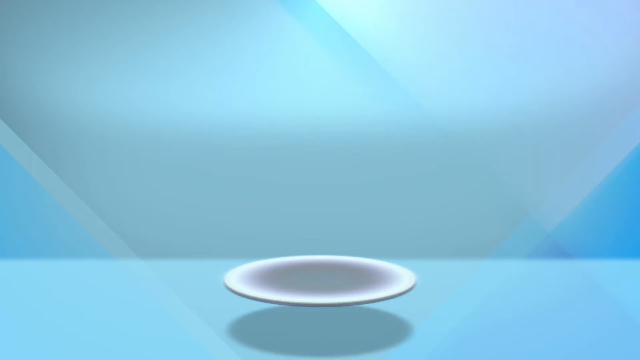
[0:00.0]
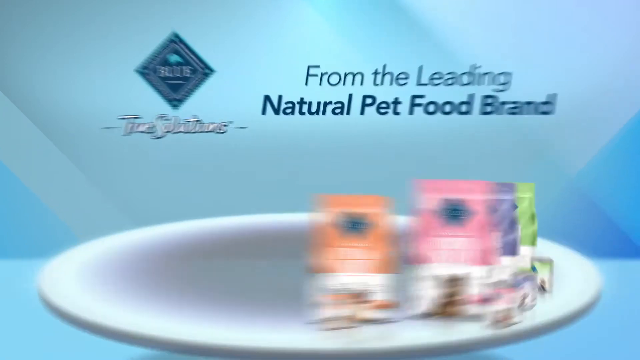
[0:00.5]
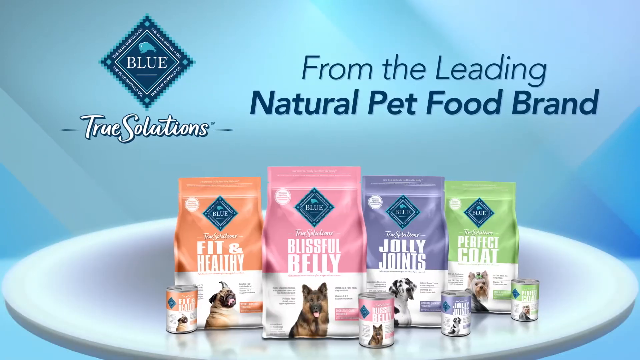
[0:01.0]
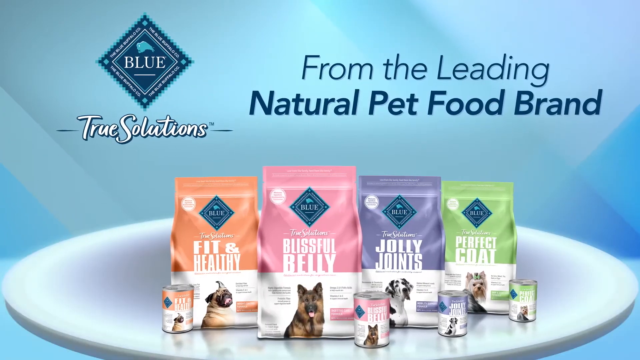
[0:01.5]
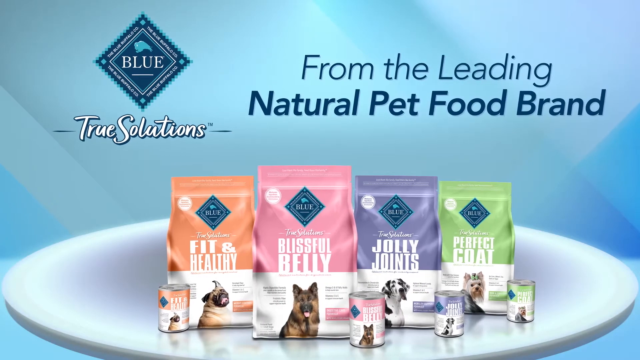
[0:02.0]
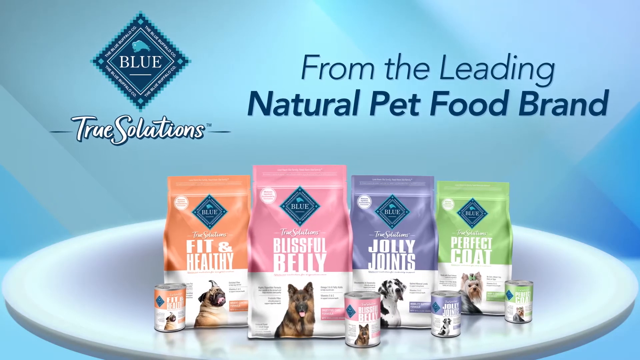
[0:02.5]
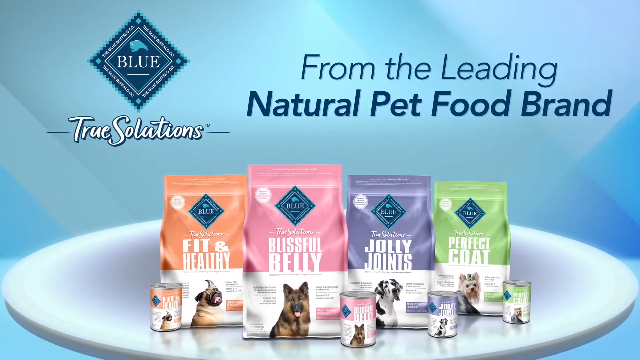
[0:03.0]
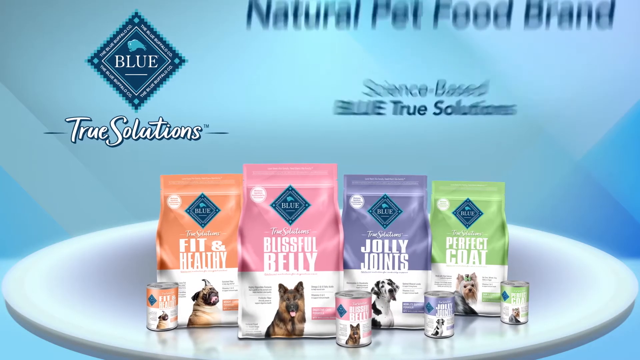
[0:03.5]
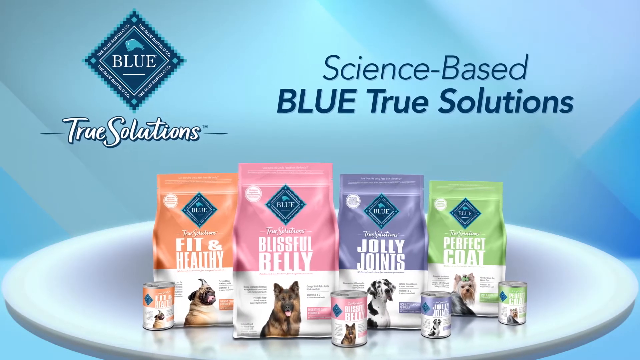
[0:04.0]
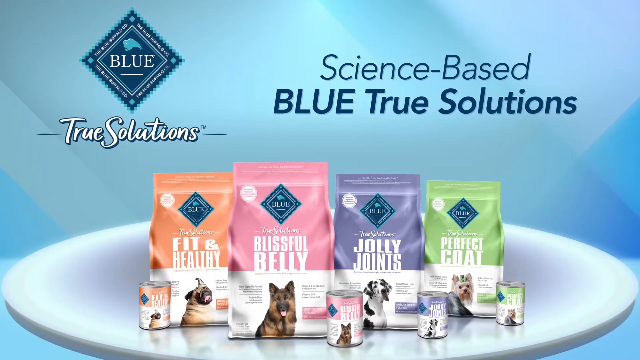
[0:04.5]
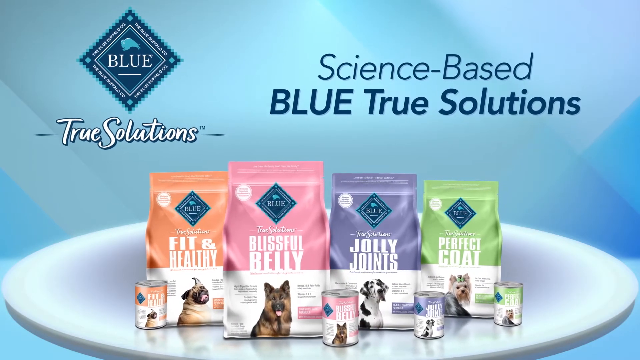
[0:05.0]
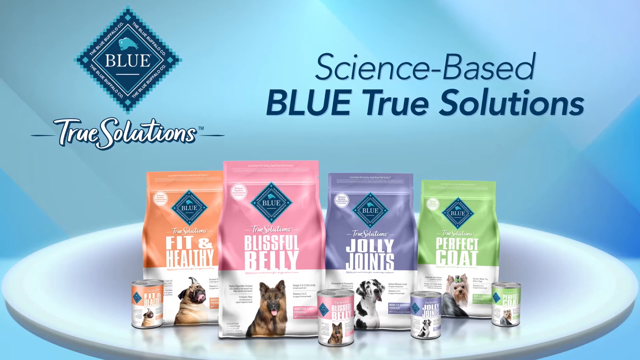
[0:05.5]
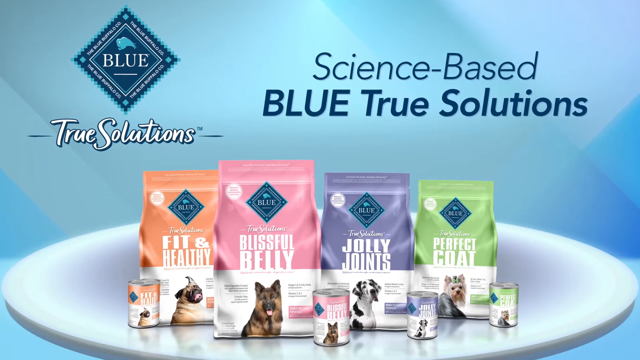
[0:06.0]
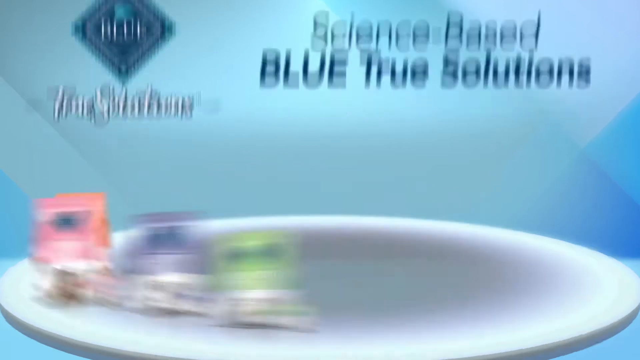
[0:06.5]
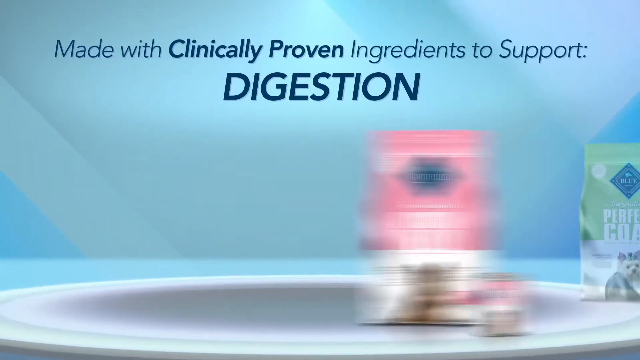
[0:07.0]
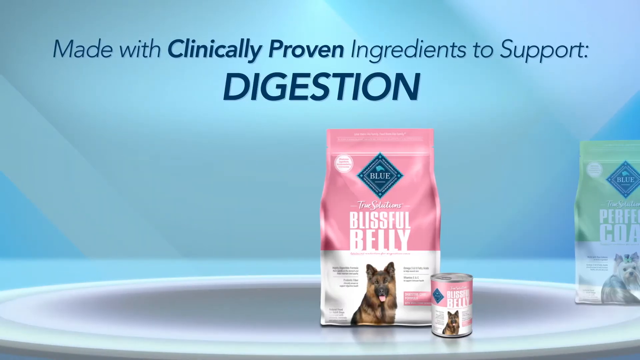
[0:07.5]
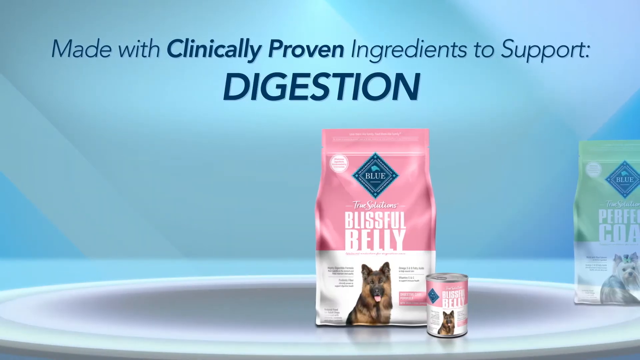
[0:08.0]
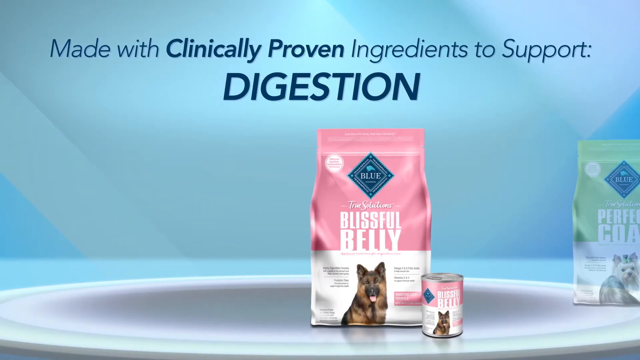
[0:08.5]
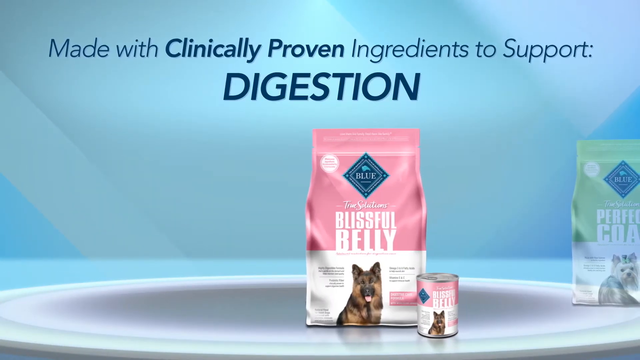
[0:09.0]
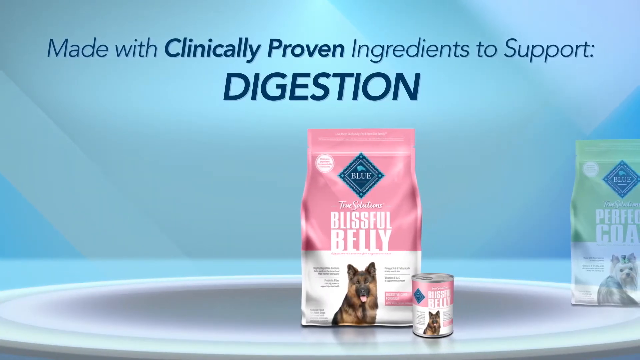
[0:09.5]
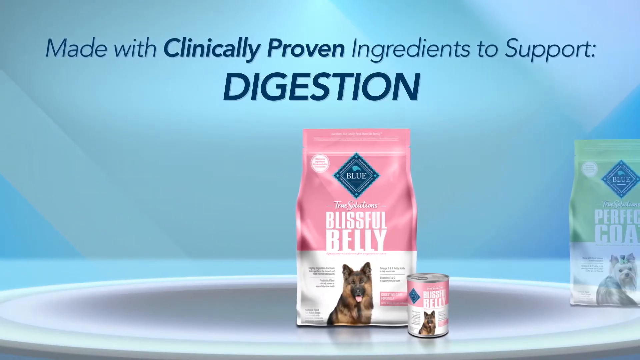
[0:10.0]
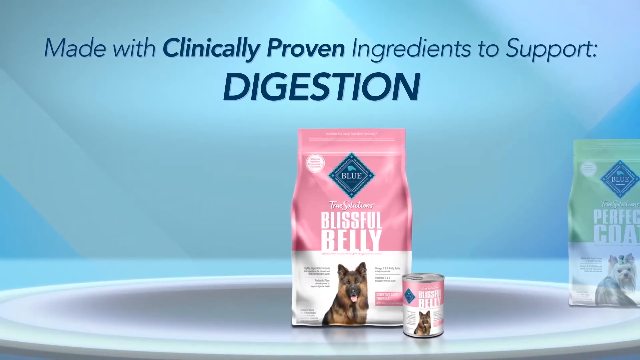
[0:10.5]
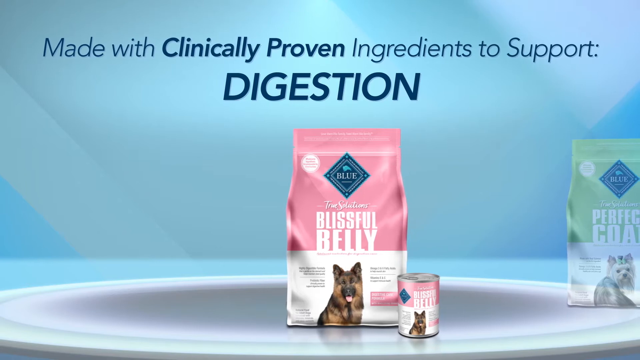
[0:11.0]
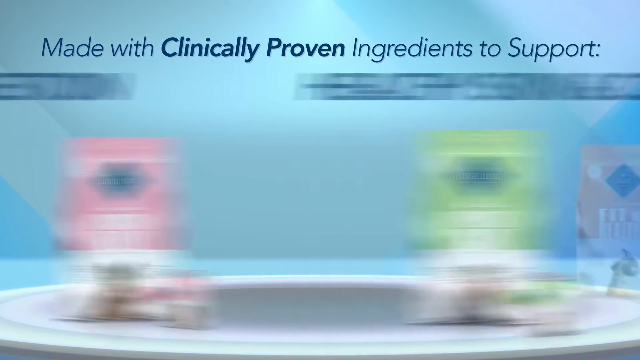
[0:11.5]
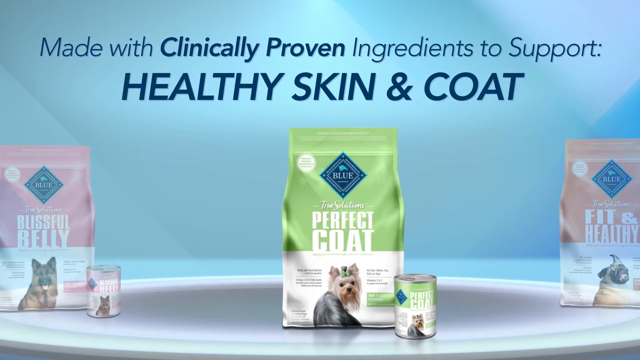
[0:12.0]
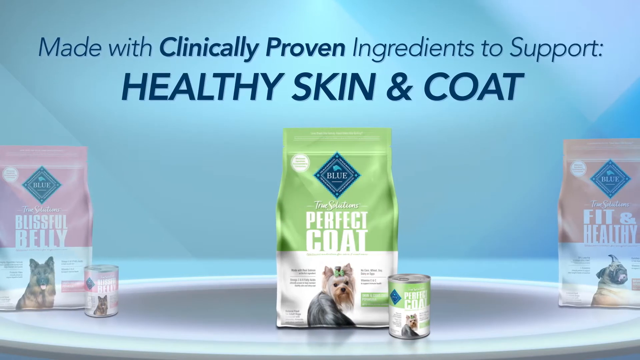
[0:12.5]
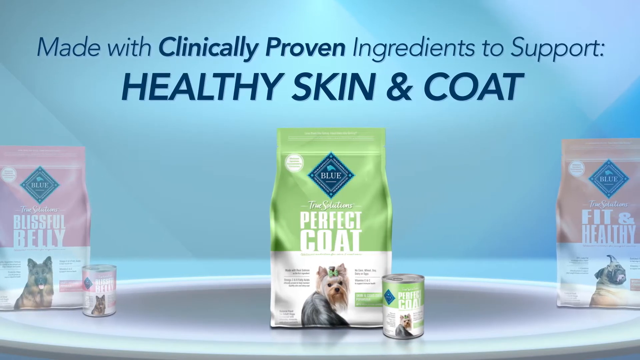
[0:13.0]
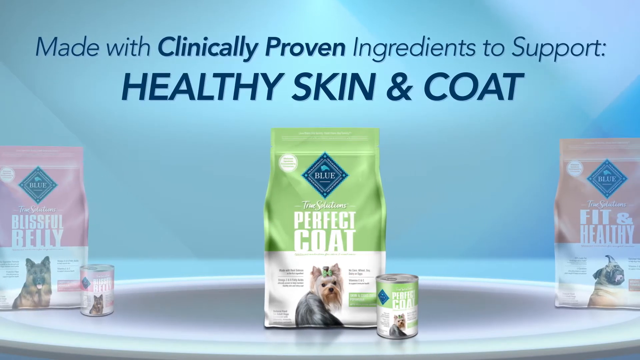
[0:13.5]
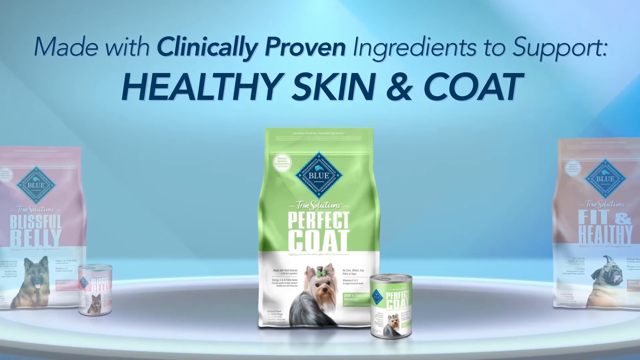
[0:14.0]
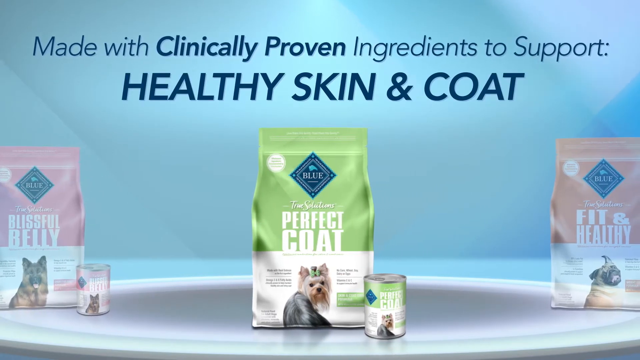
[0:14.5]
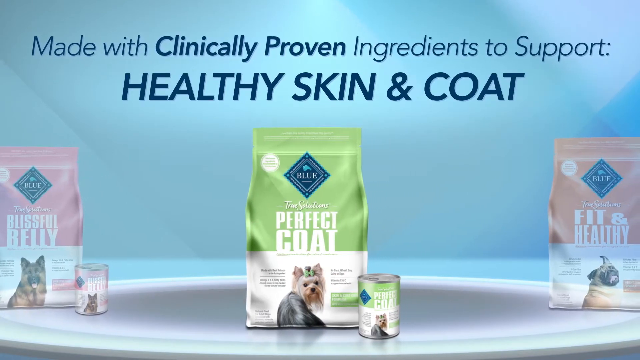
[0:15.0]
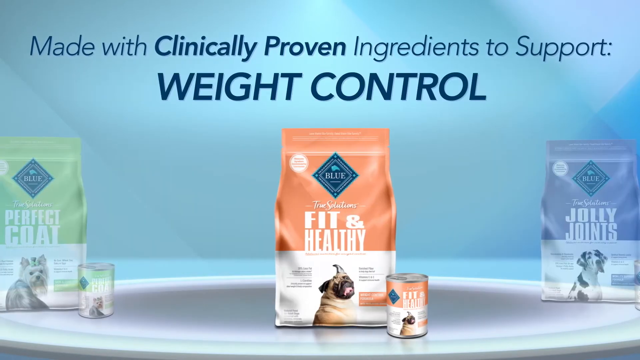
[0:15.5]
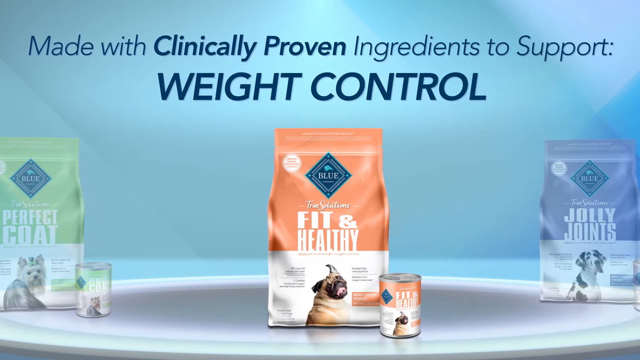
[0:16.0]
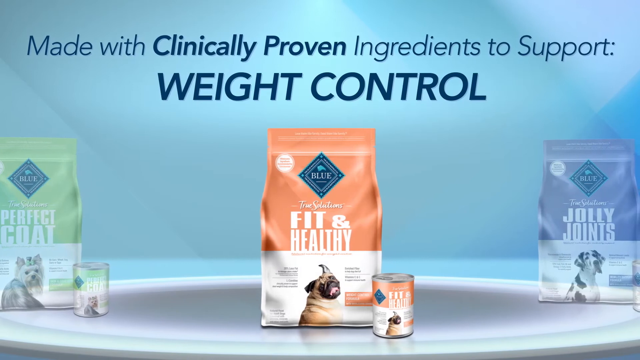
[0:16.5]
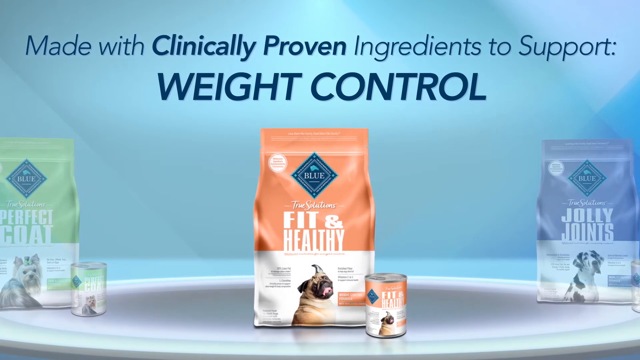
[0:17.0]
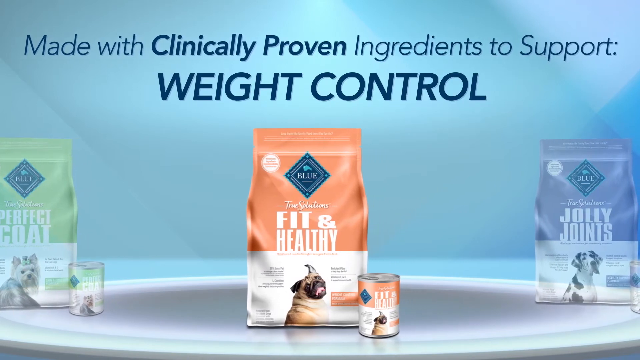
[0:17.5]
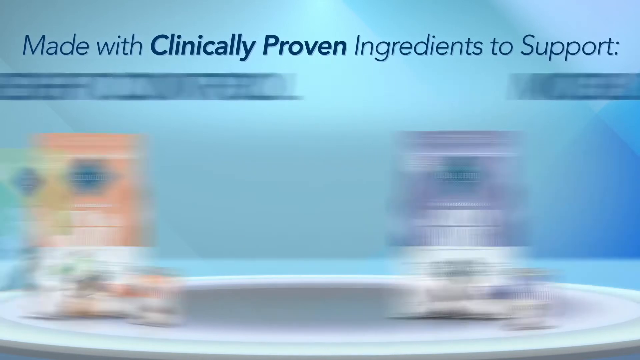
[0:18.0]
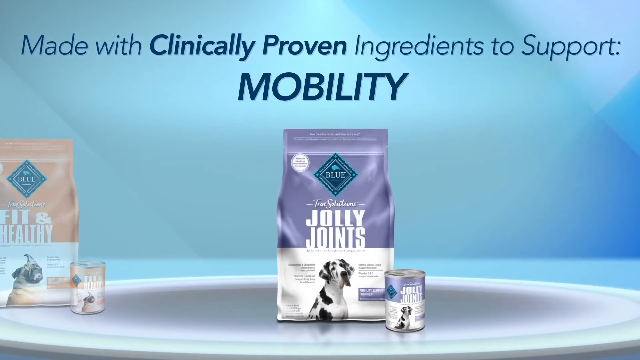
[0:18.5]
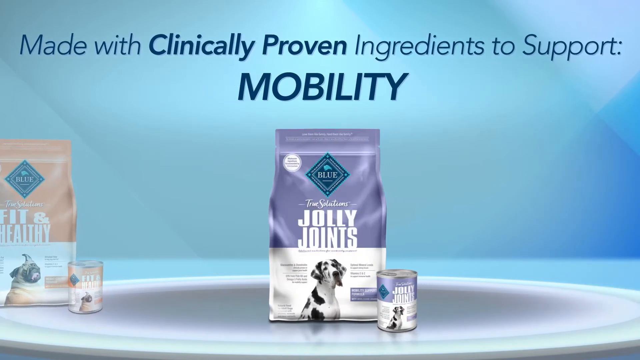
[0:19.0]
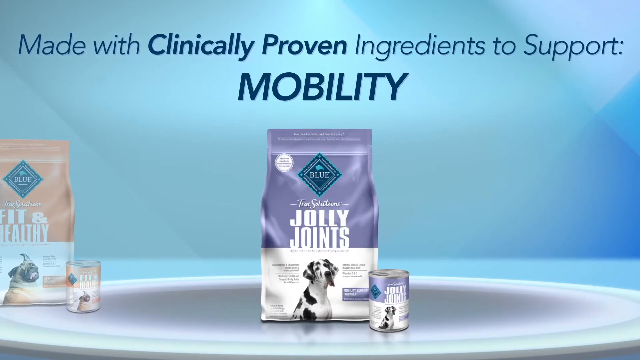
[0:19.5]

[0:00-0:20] The video opens on an image with a light blue background and a white bowl at the bottom of the screen displaying four bags of pet food. On the far left is an orange and white bag labeled "fit and healthy," with an orange and white can of food to its left. To the right of the orange bag is a pink and white bag of pet food labeled "blissful belly," with an image of a dog on the front. To the right of the pink bag is a purple and white bag of pet food with a black and white dog on the front, and a purple and white can of food is next to it. To the right of the purple and white bag is a light green and white bag of pet food with a white dog's image on the front, and to the right of that bag is a green and white can of pet food. The top of the screen says "from the leading natural pet food brand." To the left is a dark blue diamond with light blue decorative triangles and the word "blue," and below the diamond the words "true solutions" are written in white. The words "science based blue true solutions" transition onto the screen as the camera pans slightly to the left. "Made with clinically proven ingredients to support digestion" is written over the pink and white bag and can of pet food. The screen transitions to the right, where the green and white bag of pet food appears with the words "made with clinically proven ingredients to support healthy skin and coat." The camera transitions to the right again to the orange and white bag and can of pet food with the words "made with clinically proven ingredients to support weight control." The camera then pans to the right, and the purple and white bag and can of food appear with the words "made with clinically proven ingredients to support mobility."